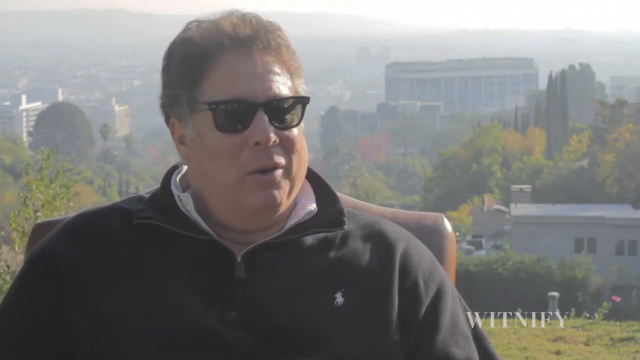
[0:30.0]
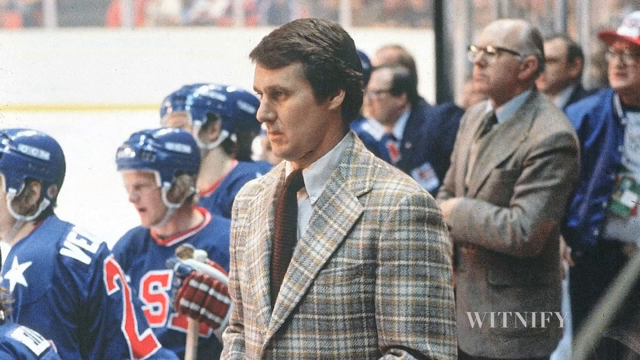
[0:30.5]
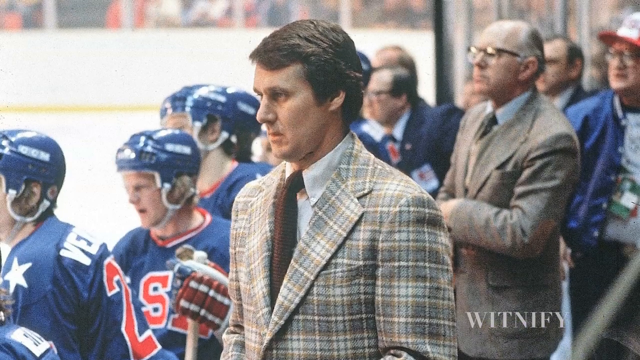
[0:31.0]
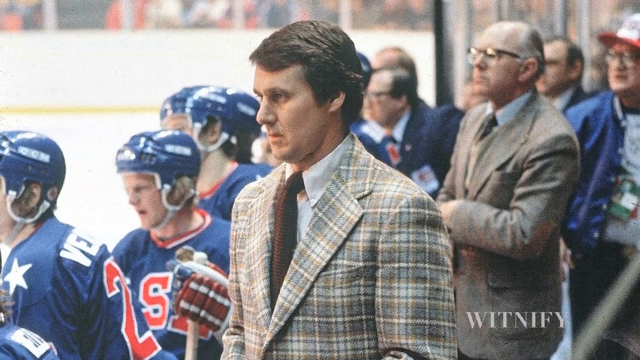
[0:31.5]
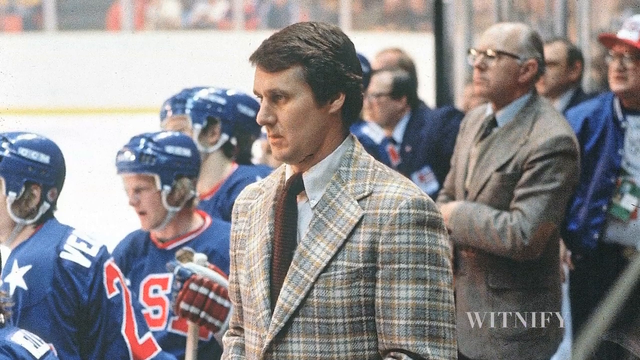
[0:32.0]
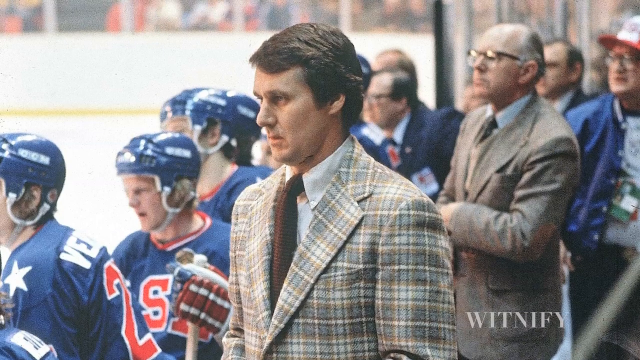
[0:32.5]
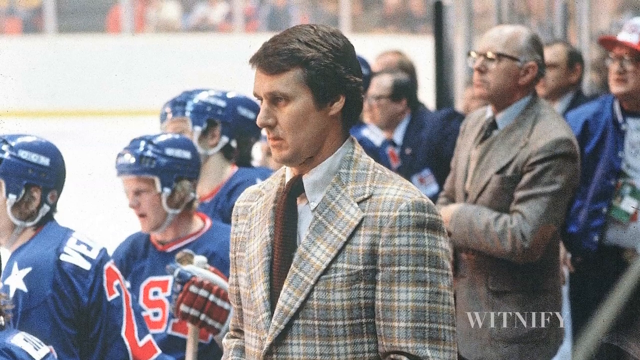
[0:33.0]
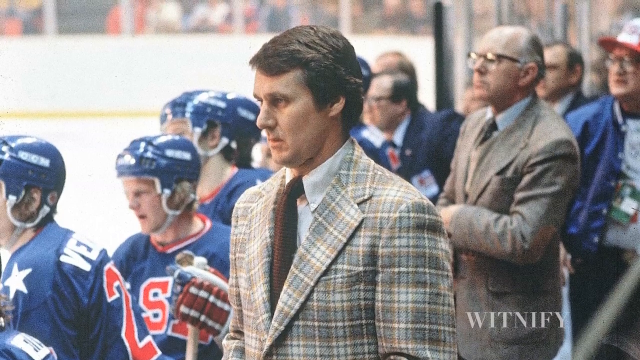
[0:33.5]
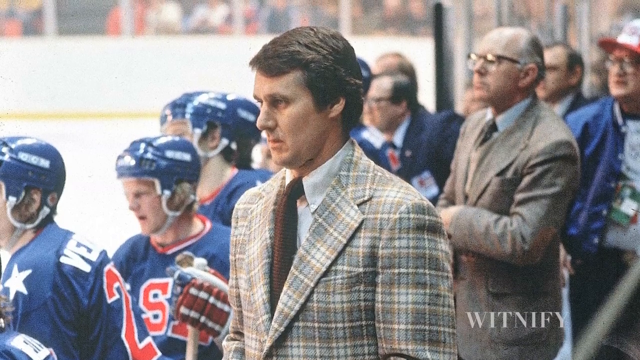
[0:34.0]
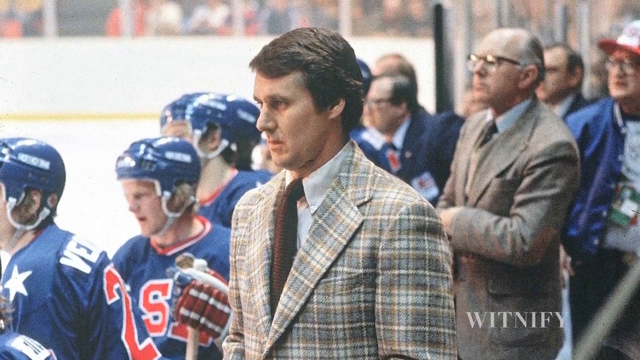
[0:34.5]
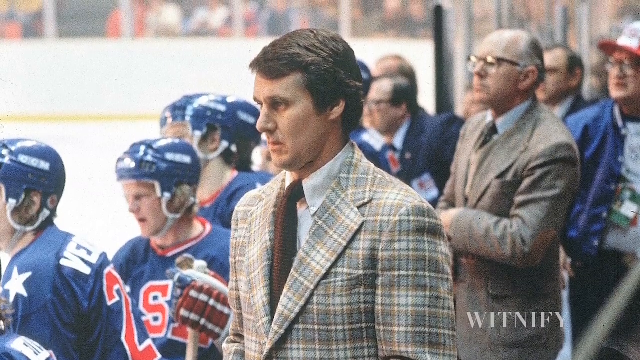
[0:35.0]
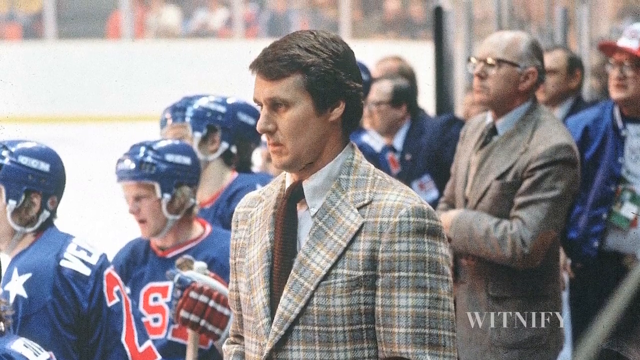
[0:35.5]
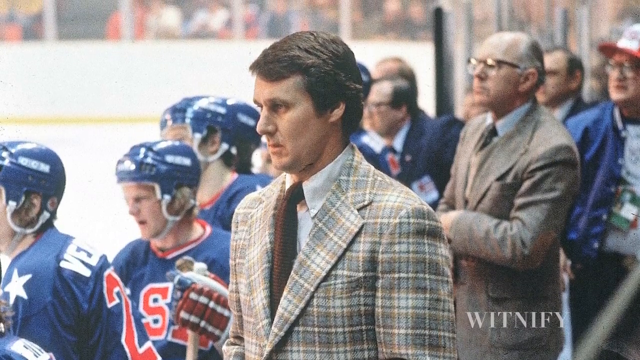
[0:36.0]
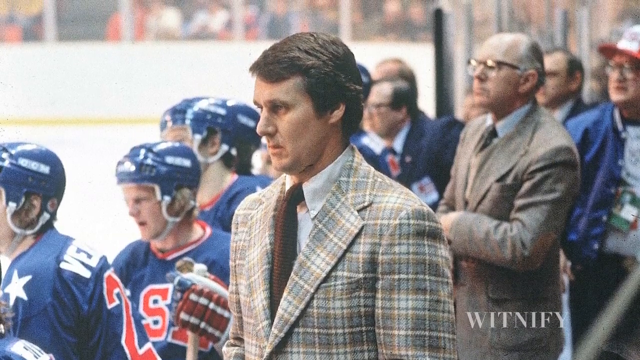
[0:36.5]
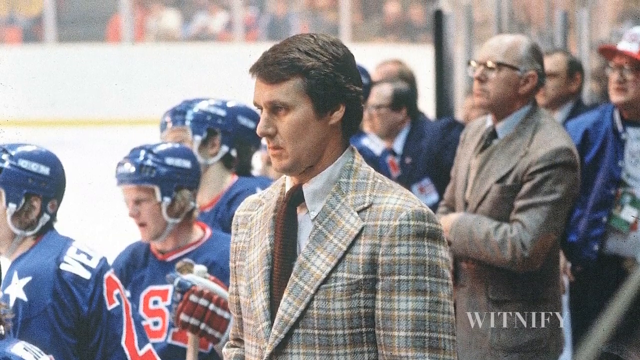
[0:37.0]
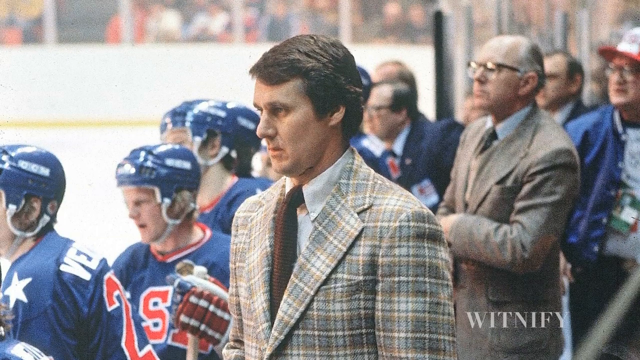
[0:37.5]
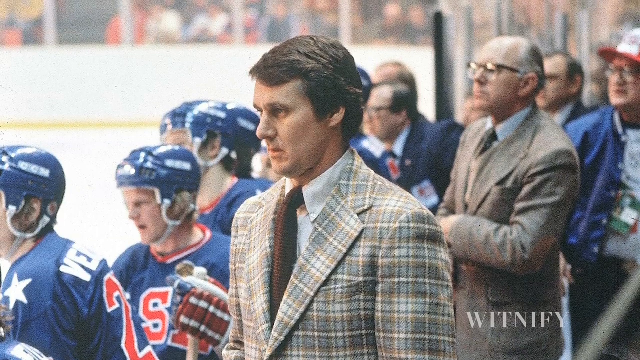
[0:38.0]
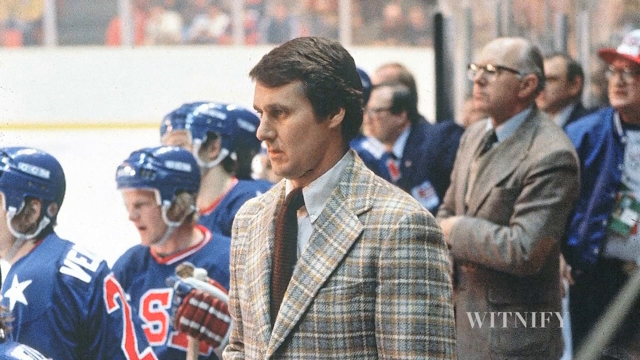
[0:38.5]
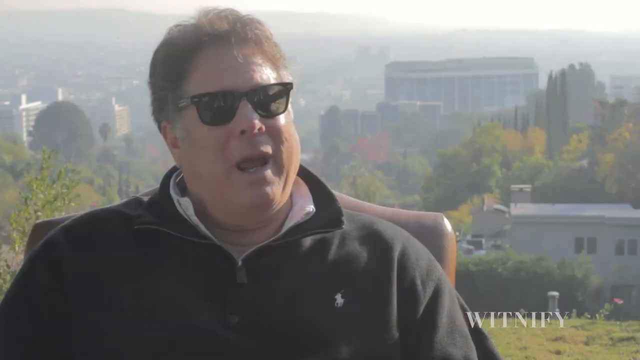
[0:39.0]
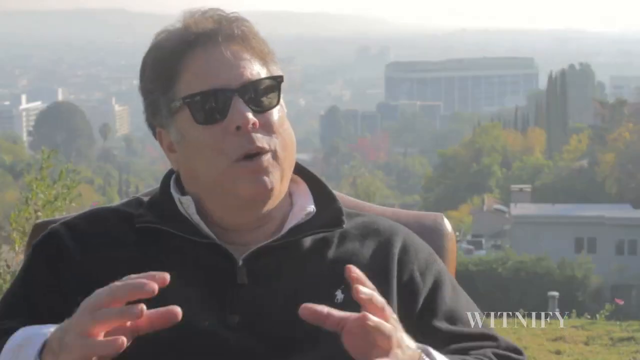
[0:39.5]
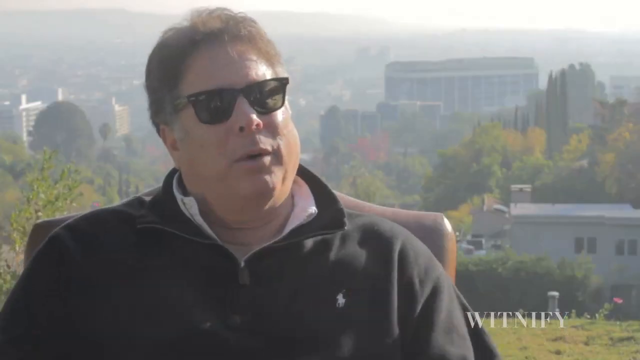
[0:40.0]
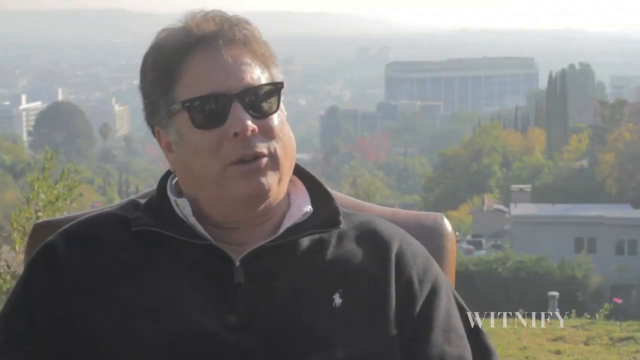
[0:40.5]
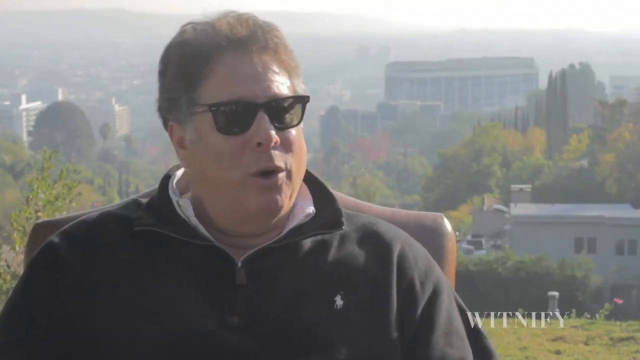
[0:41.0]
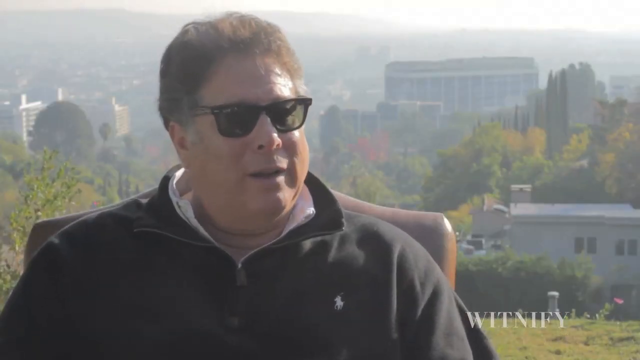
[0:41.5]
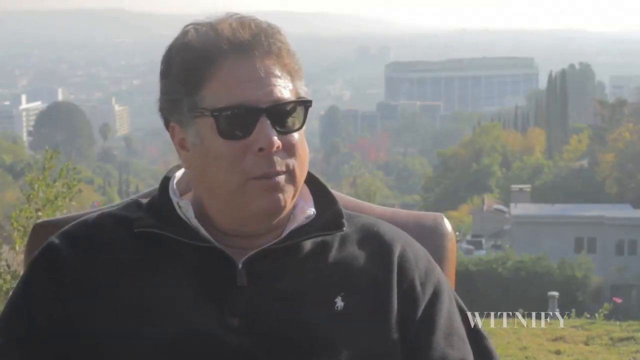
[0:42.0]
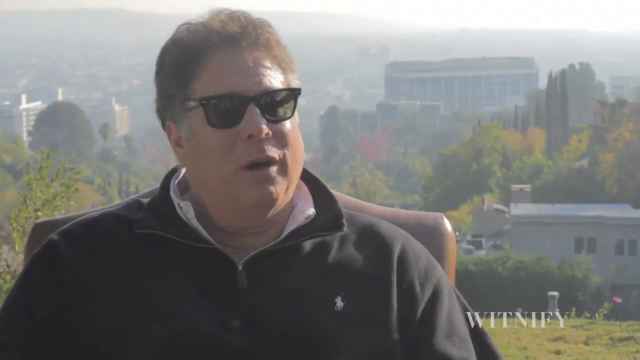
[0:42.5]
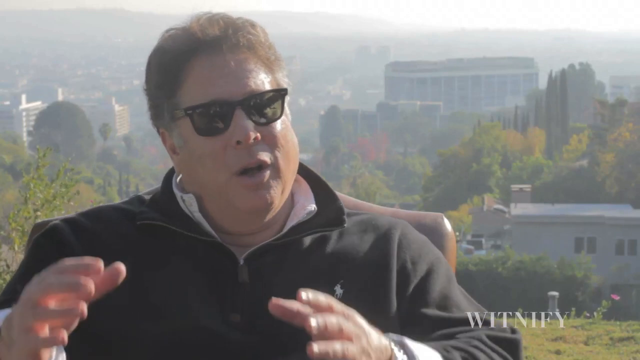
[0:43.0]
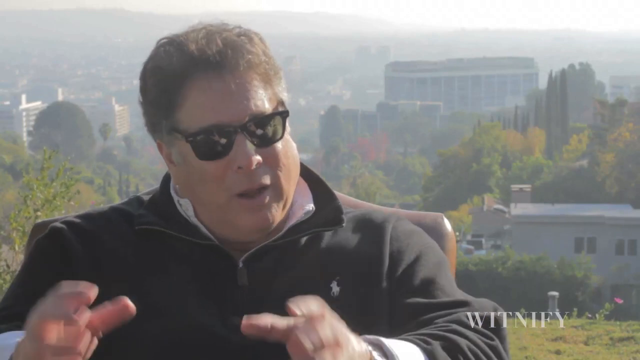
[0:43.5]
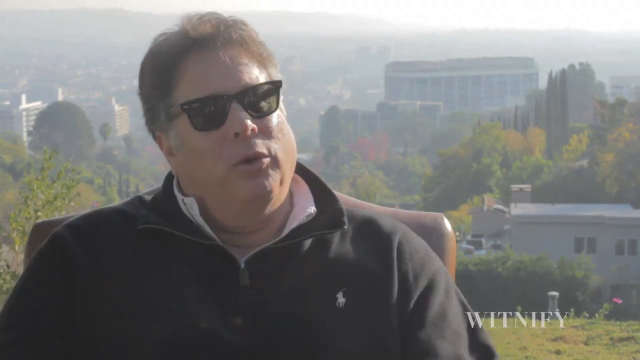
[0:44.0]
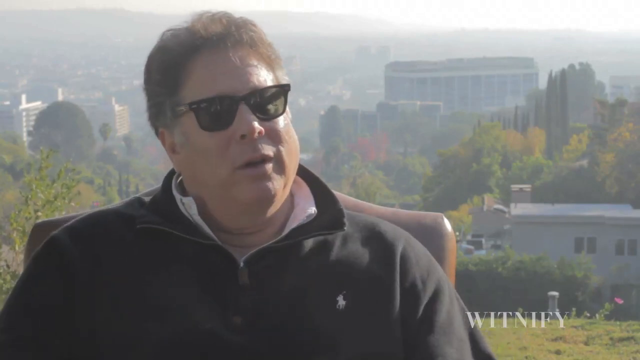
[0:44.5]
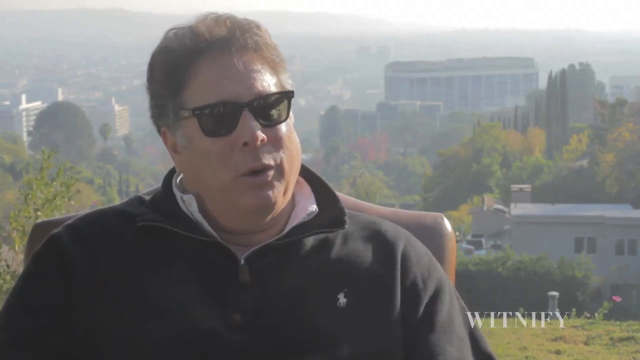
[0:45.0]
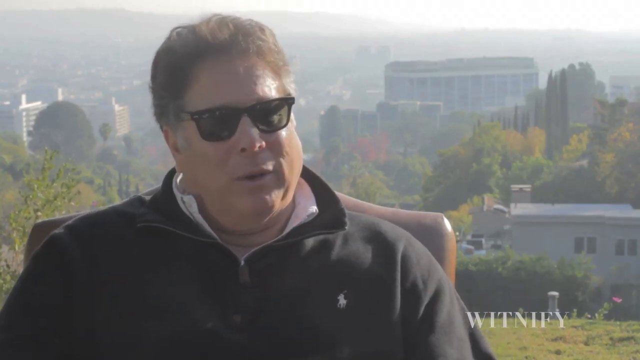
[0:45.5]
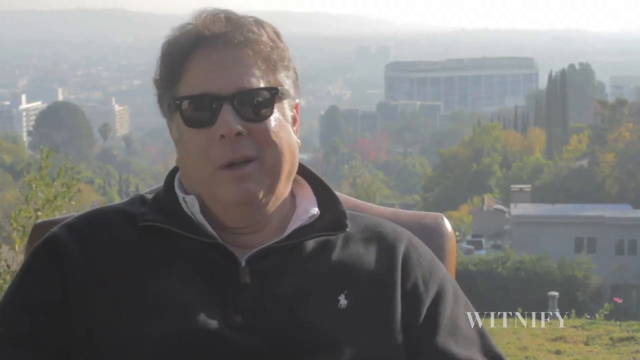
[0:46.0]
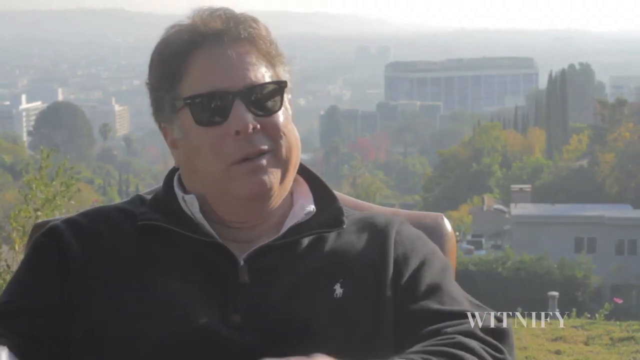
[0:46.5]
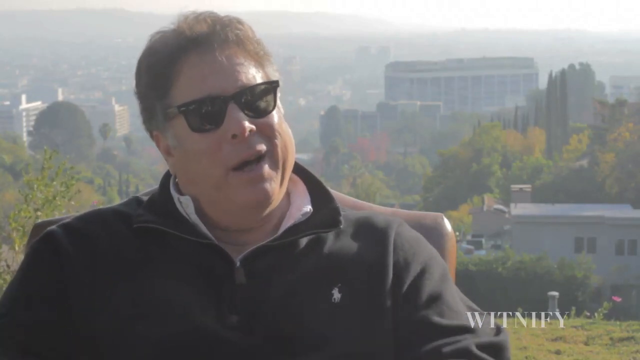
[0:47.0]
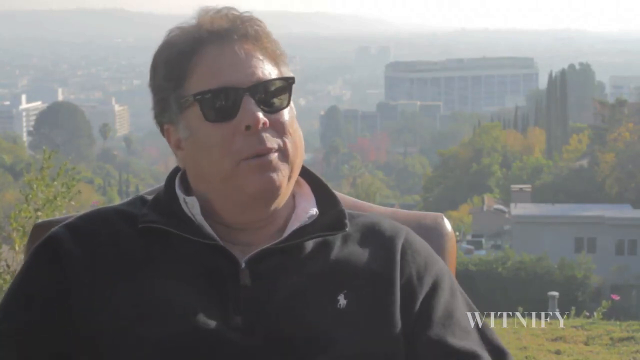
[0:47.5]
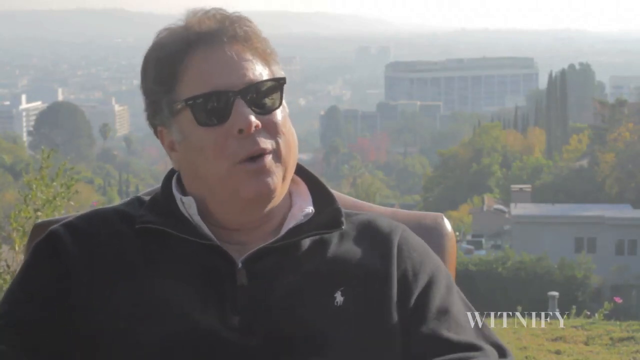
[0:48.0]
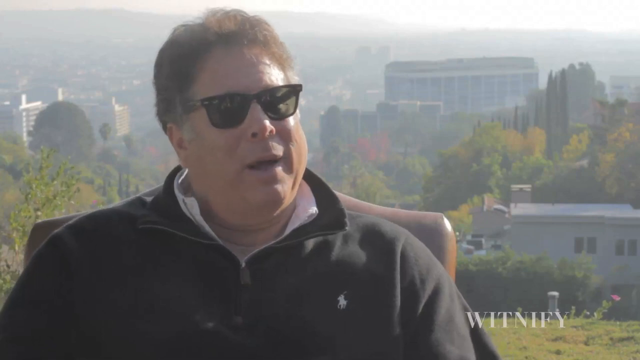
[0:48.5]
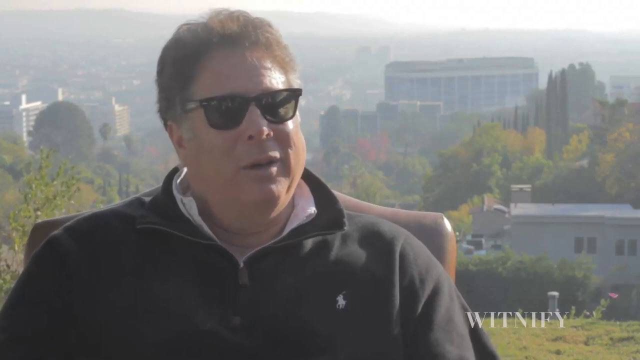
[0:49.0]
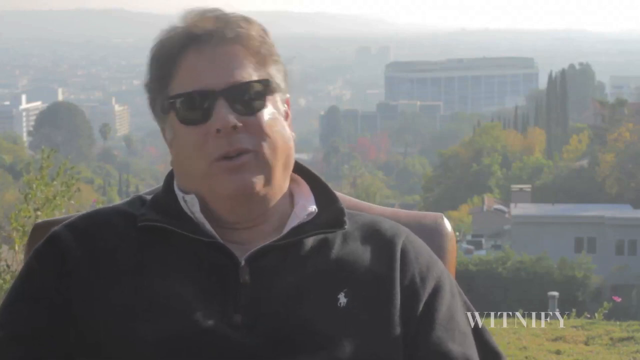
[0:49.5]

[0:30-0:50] David Israel continues to speak, and a photo shows the USA hockey coach wearing a plaid suit with a brown tie. He looks onto the ice with a stoic expression. In the background are some of the USA hockey players, now wearing blue uniforms with blue helmets, and an older man in glasses and a suit is directly behind the coach. David Israel is then shown again speaking outside into a camera. He uses his hands to make gestures and demonstrate a point as he continues to speak. Toward the end he turns his head slightly to his right, and his hands come up again as he keeps speaking. The background is the same foggy cityscape, with some trees and buildings visible behind him.